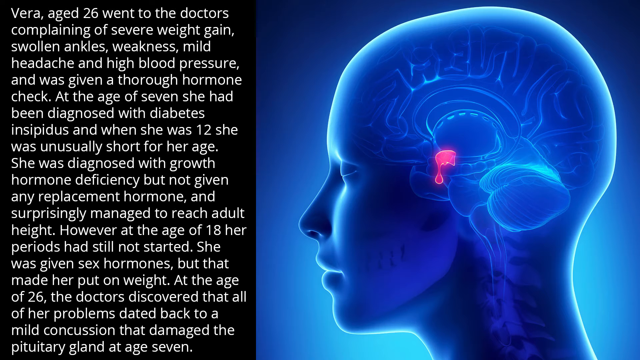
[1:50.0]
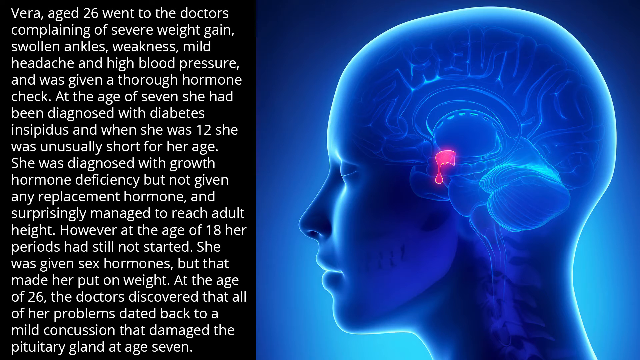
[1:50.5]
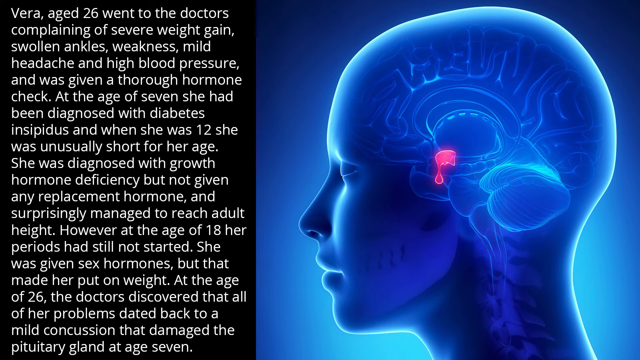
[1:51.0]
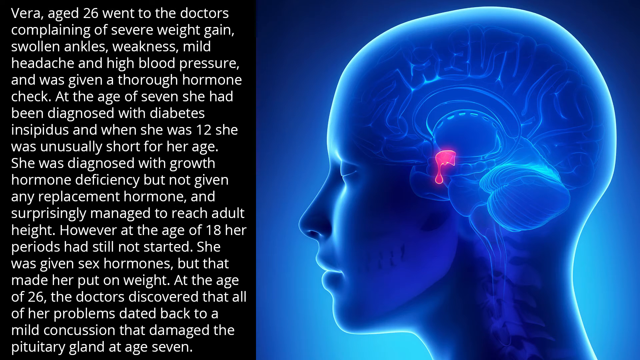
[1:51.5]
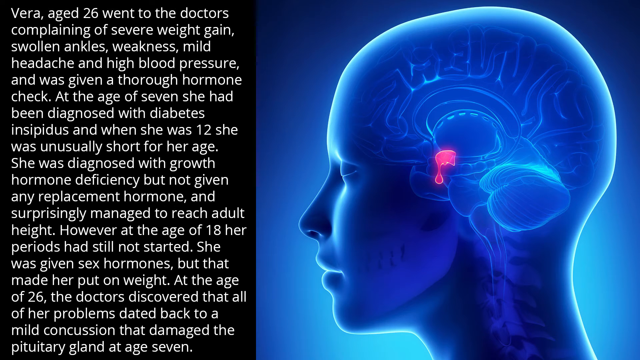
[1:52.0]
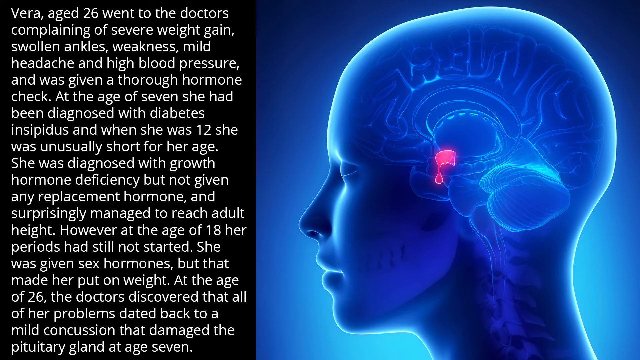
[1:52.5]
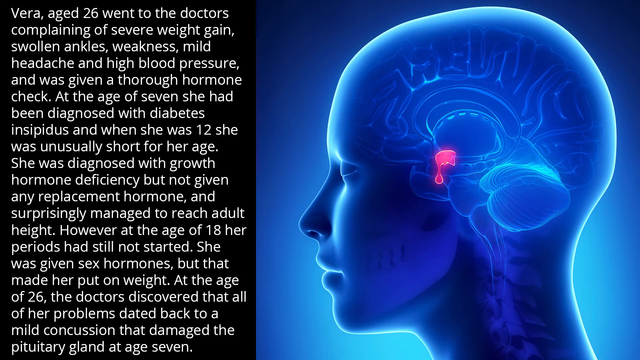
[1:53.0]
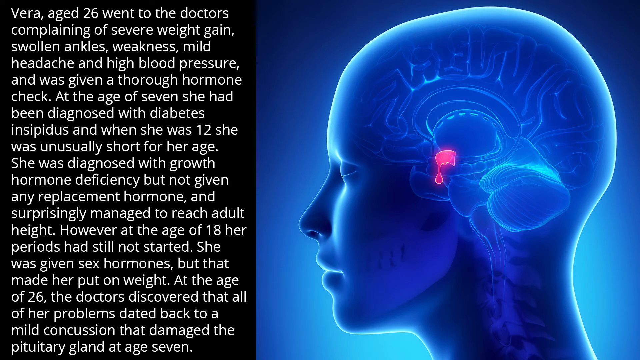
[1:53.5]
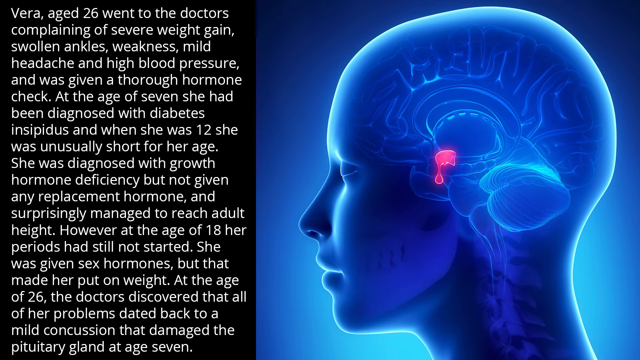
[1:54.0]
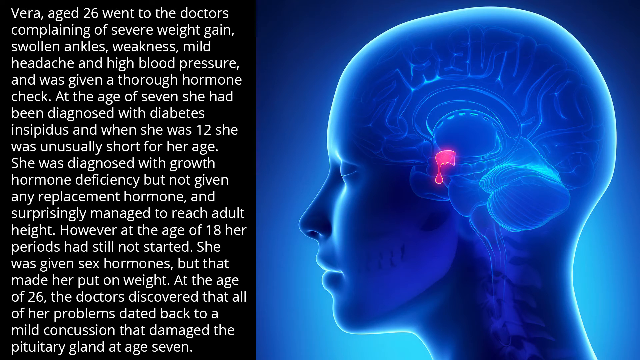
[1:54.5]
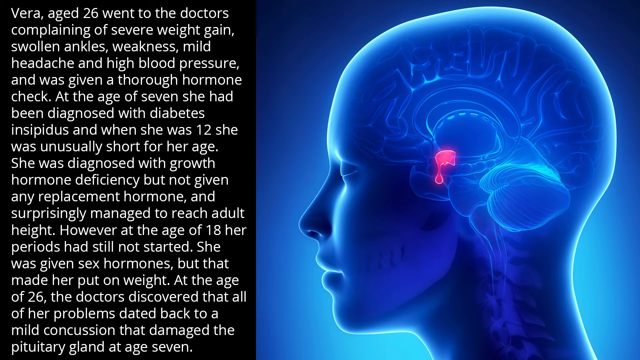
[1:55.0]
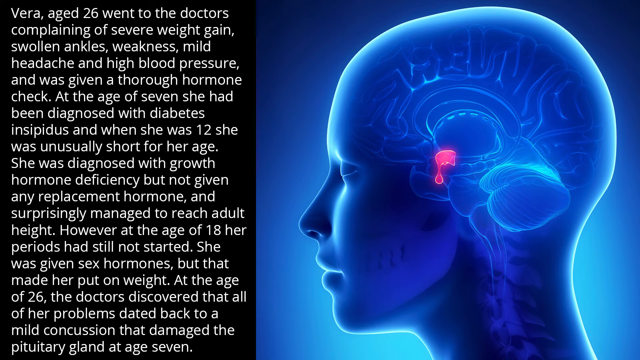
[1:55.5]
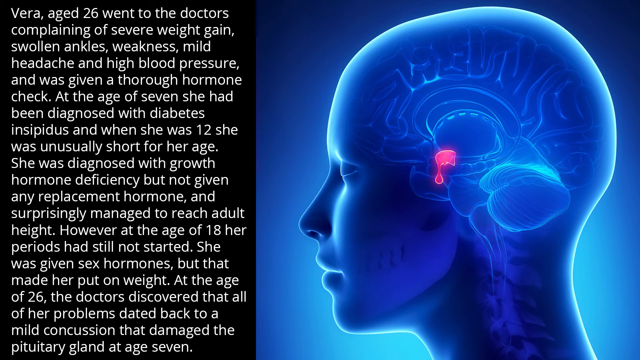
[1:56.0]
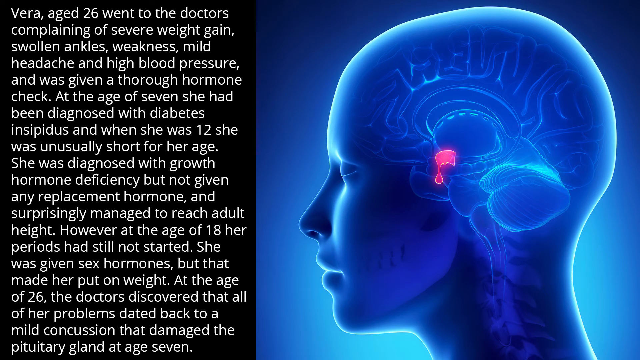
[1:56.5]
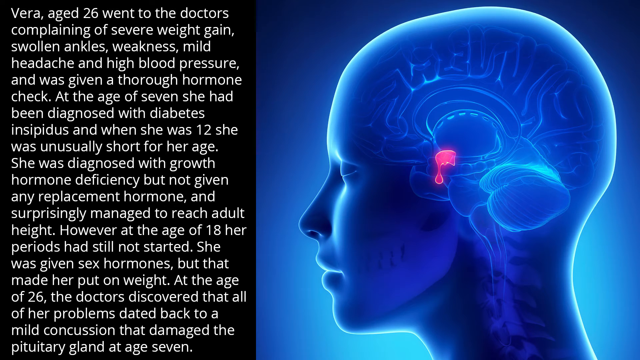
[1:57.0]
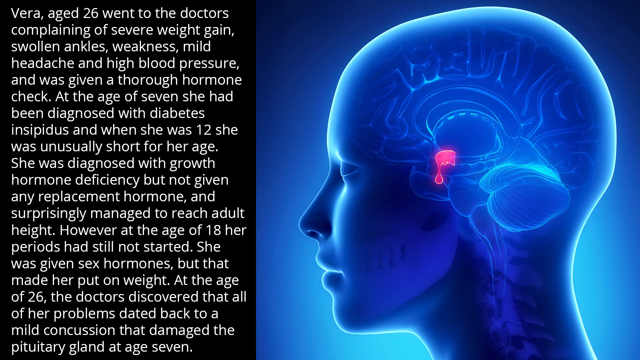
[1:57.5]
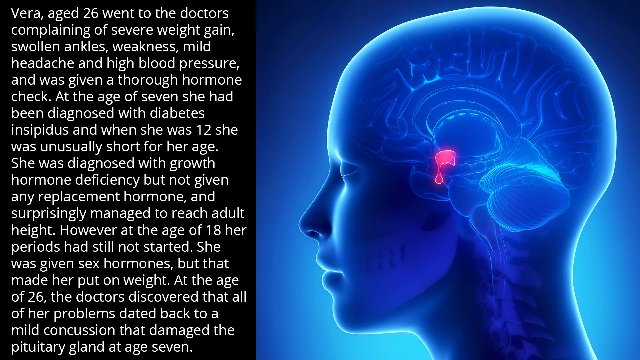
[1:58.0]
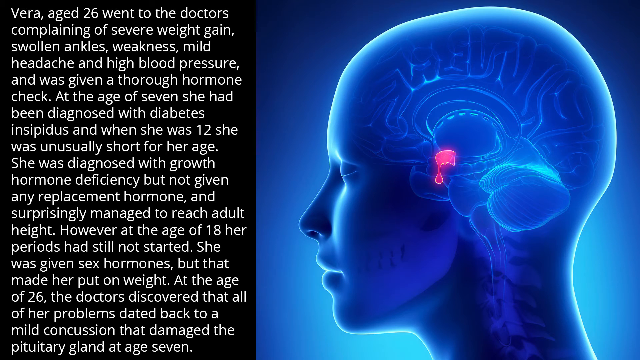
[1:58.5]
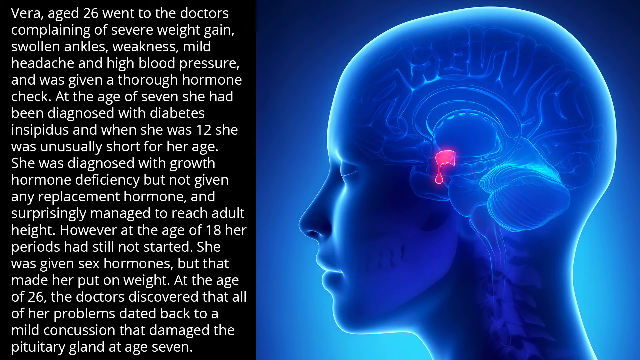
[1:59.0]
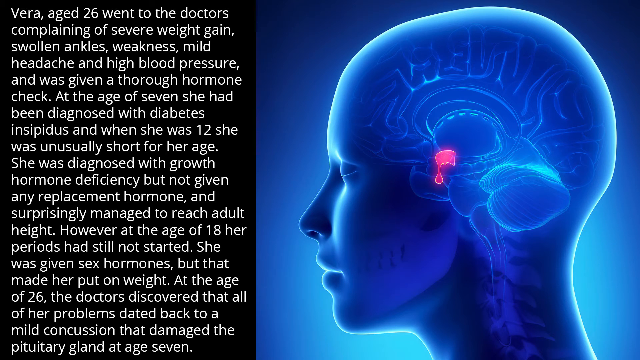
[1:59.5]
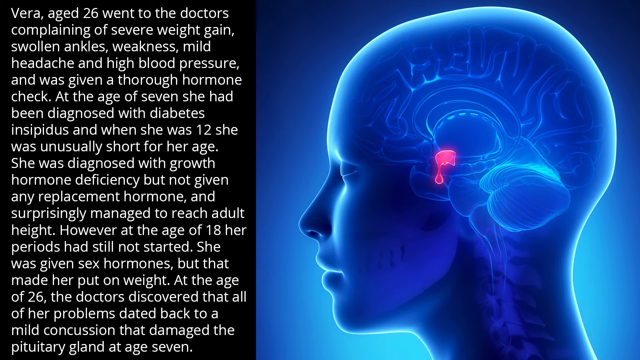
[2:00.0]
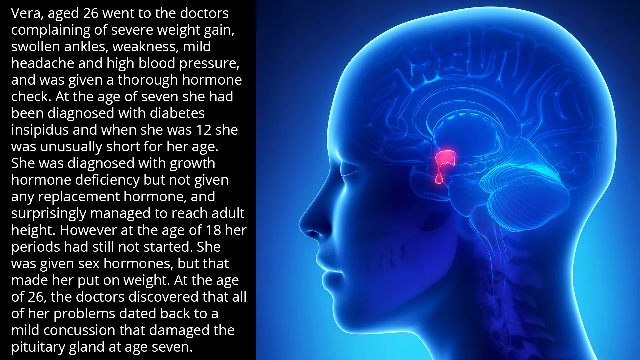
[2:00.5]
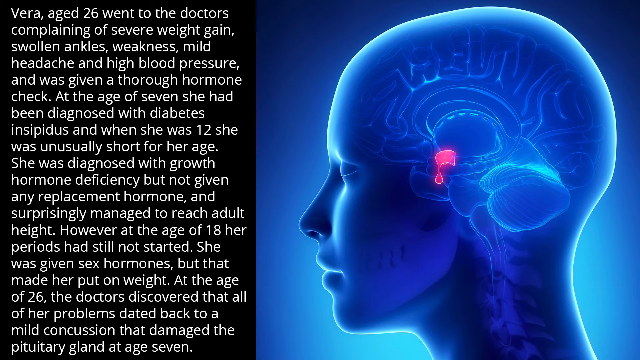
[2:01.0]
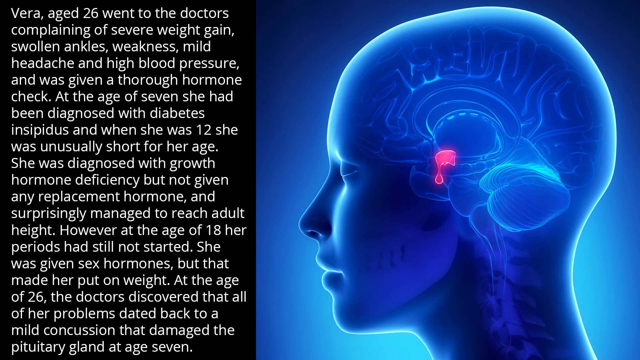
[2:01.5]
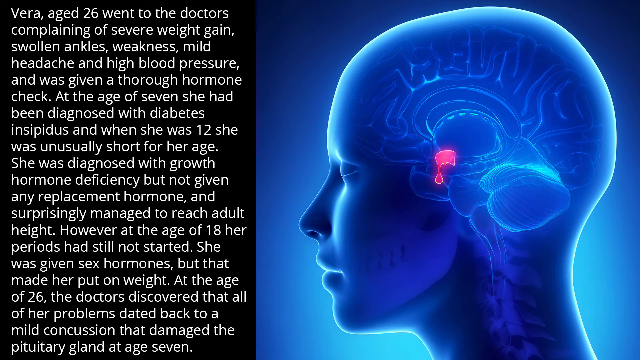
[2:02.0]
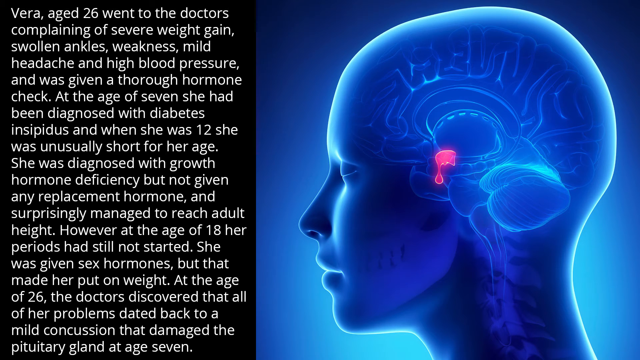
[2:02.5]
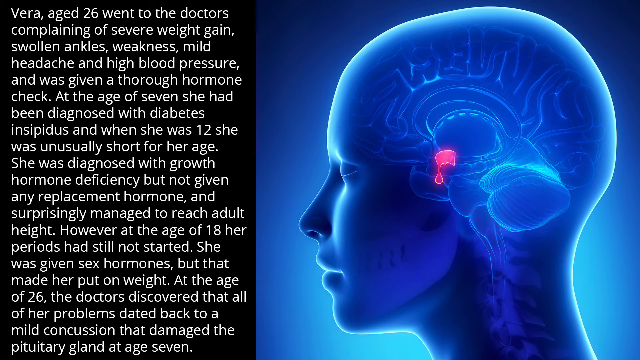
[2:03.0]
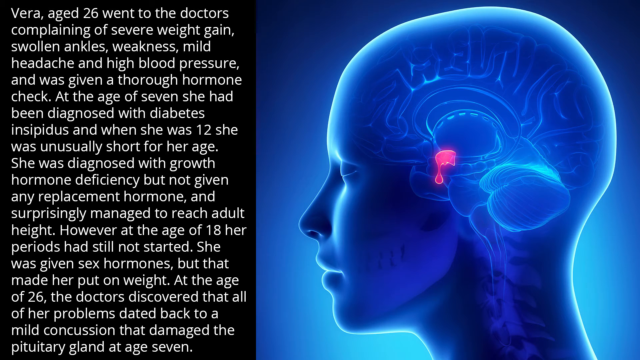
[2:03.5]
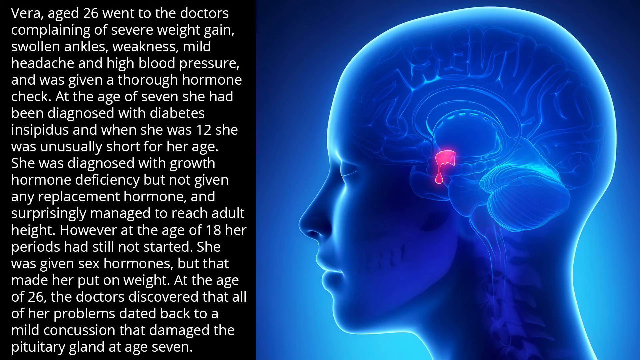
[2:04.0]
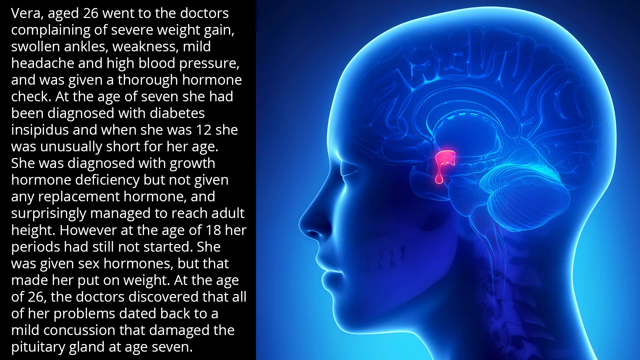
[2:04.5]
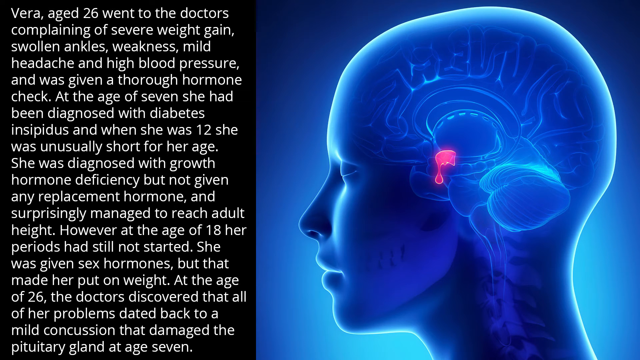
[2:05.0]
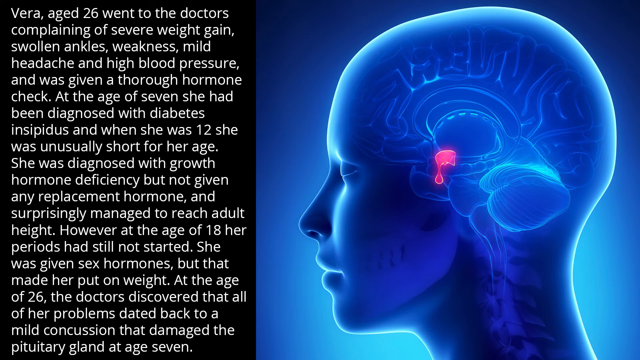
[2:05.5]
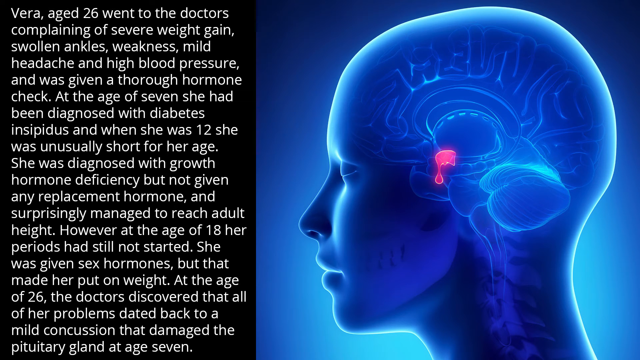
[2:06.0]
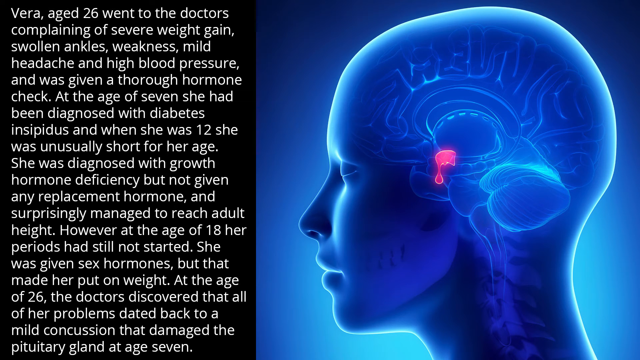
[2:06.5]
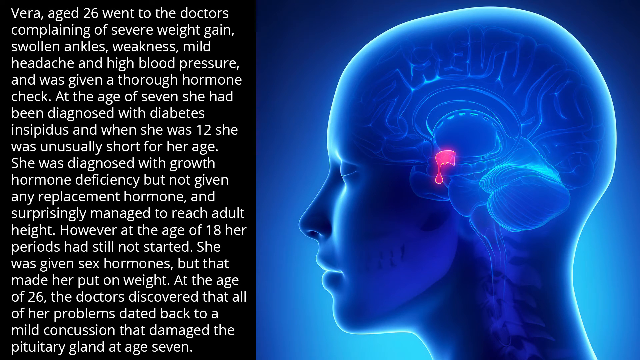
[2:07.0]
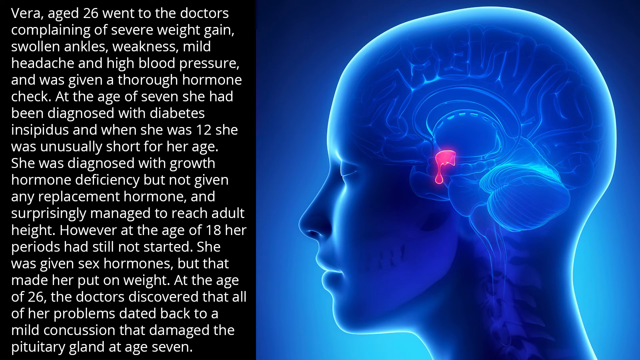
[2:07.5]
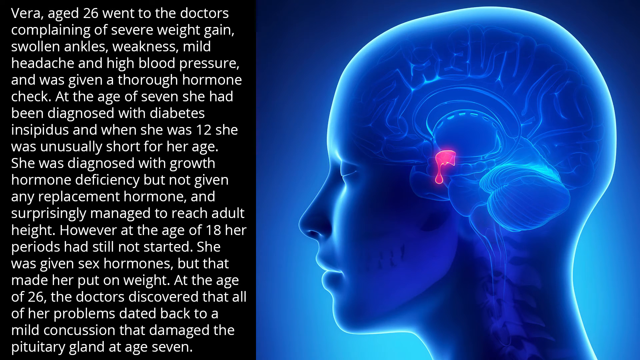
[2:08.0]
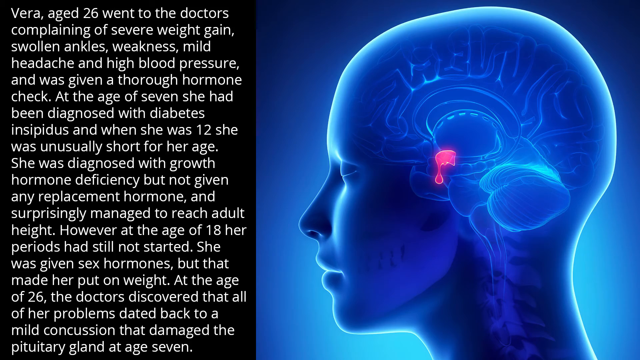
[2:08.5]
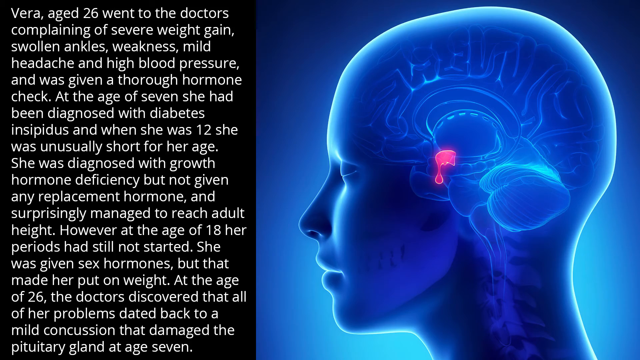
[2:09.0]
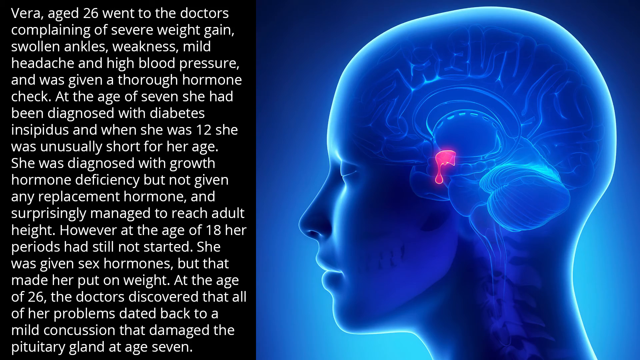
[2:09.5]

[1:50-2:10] The same static slide remains, with no moving parts. The left third of the screen is a black background with white text going through the case study of someone with a damaged pituitary gland and the resulting health effects, namely Vera. The right two thirds show a computer-generated figure of a human head in side profile, with the brain visible through the skull and a pink area highlighted as the pituitary gland. The slide does not change.